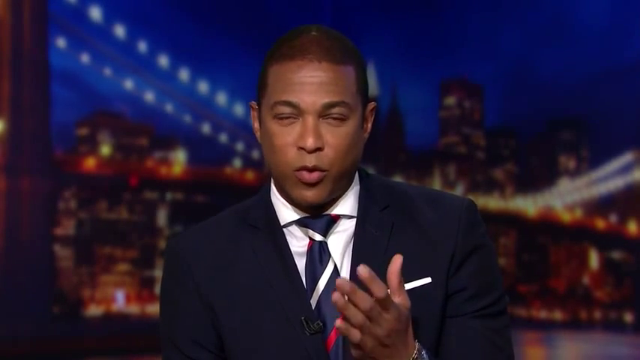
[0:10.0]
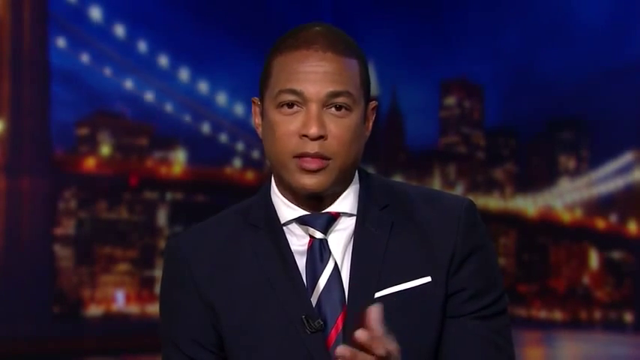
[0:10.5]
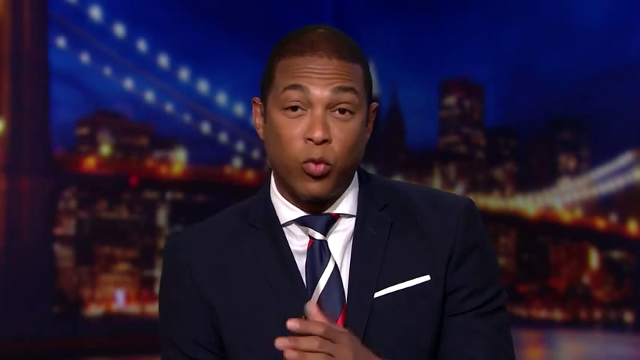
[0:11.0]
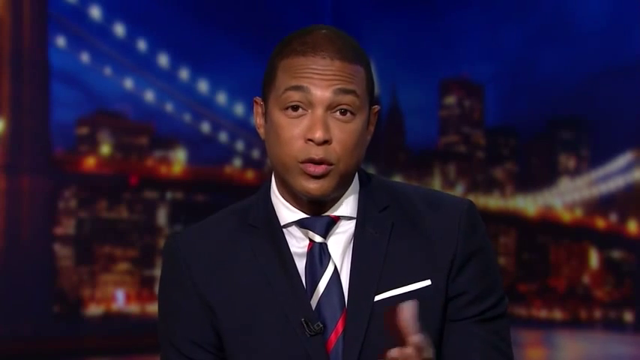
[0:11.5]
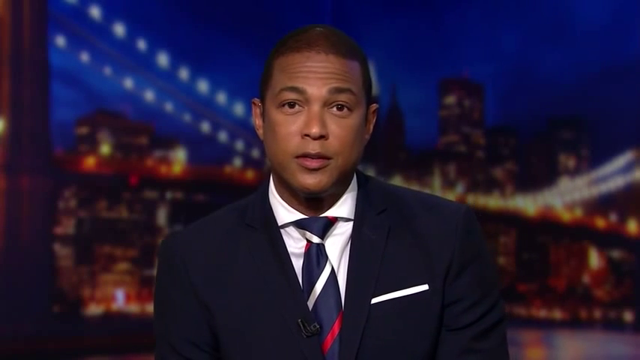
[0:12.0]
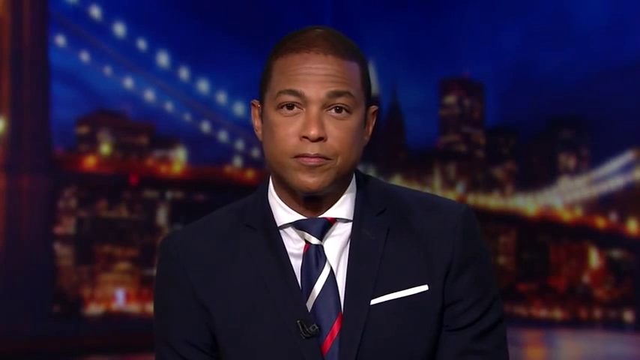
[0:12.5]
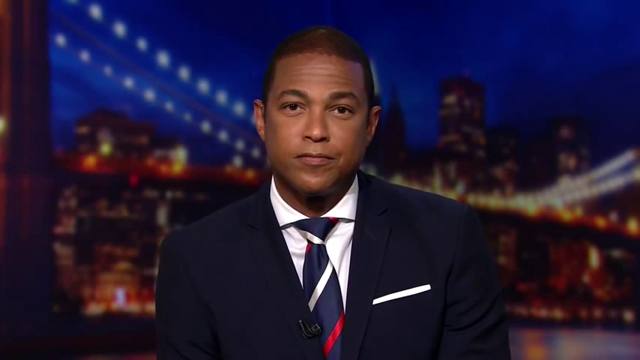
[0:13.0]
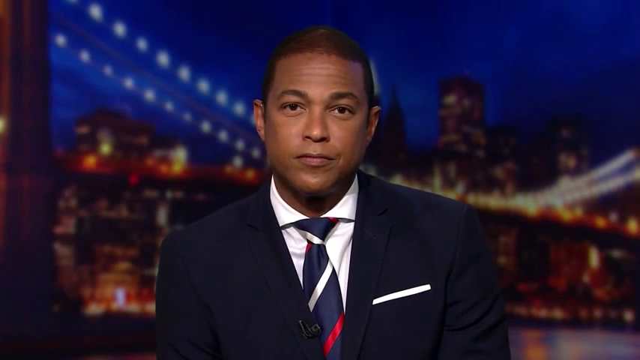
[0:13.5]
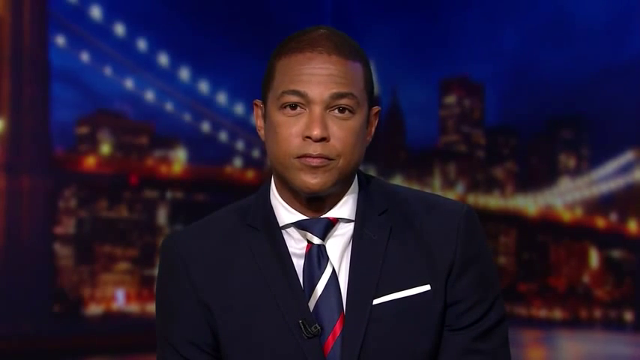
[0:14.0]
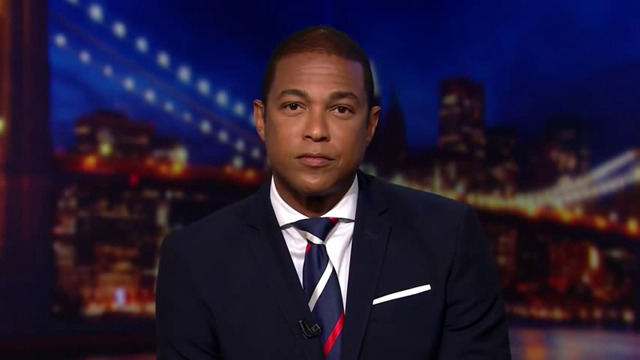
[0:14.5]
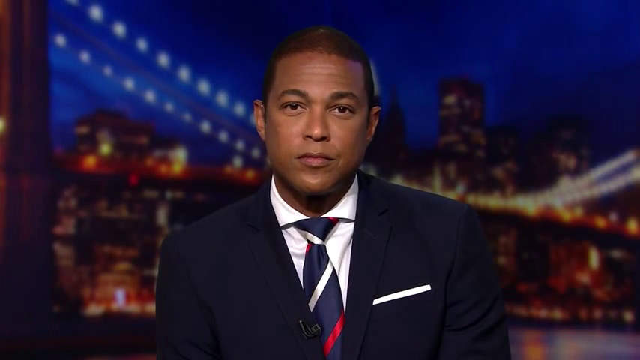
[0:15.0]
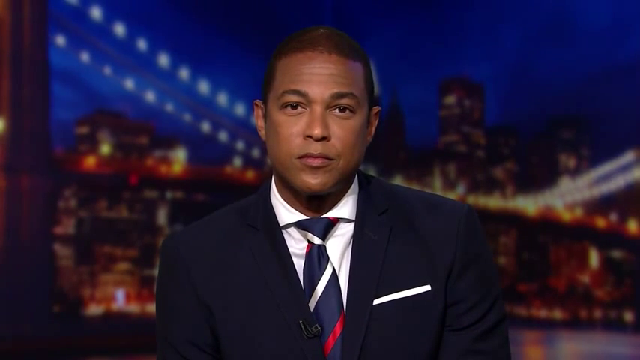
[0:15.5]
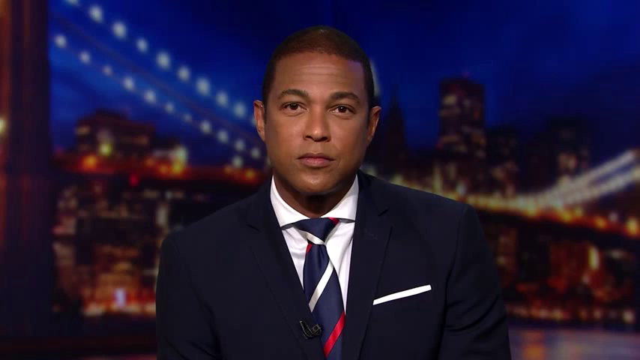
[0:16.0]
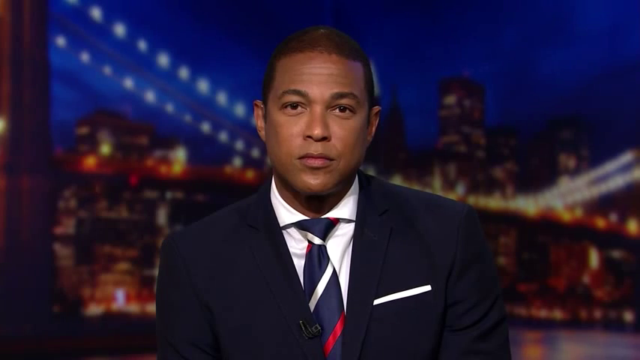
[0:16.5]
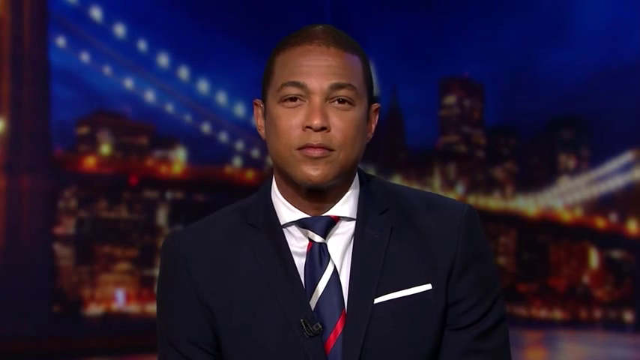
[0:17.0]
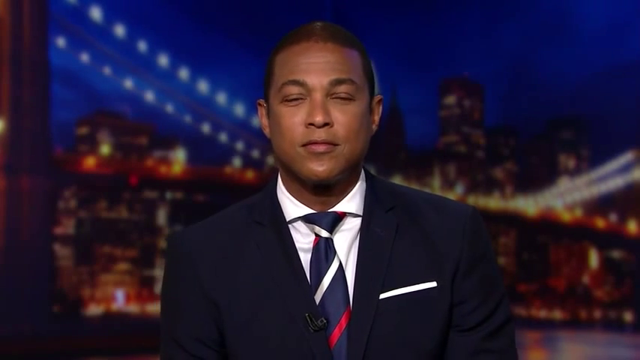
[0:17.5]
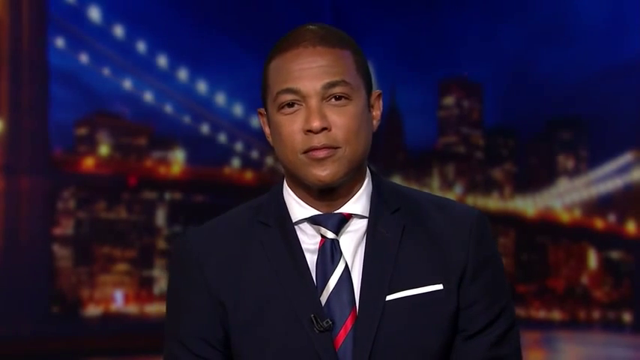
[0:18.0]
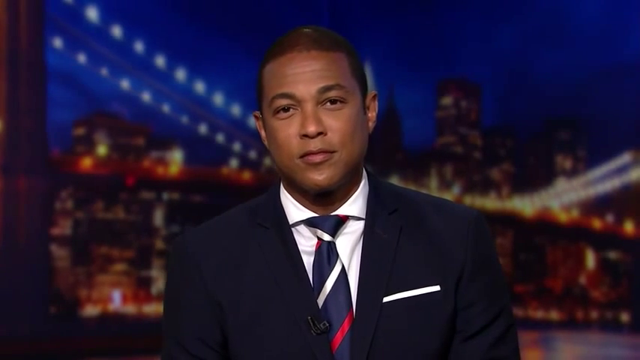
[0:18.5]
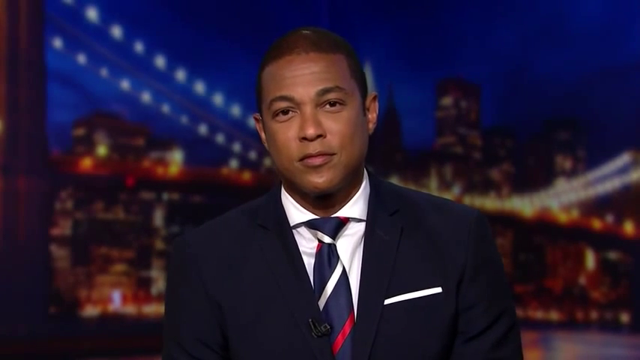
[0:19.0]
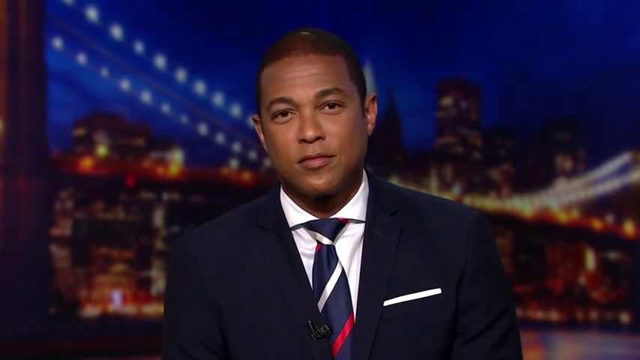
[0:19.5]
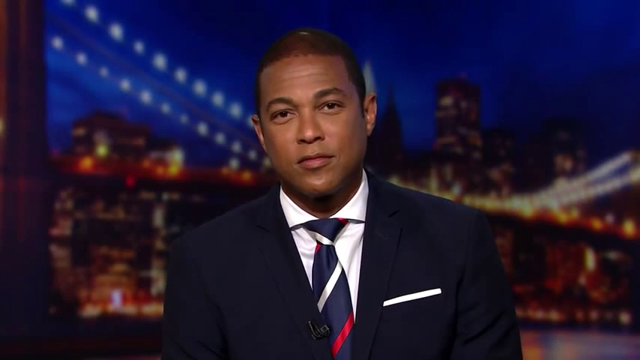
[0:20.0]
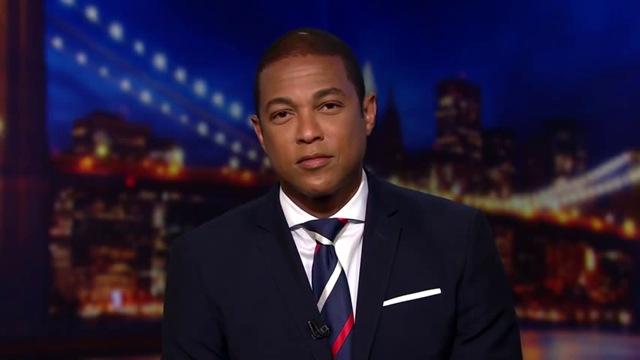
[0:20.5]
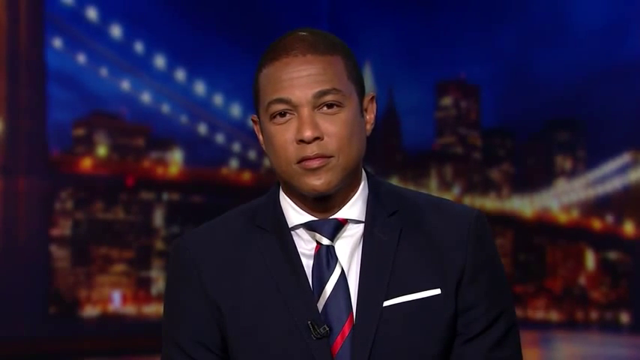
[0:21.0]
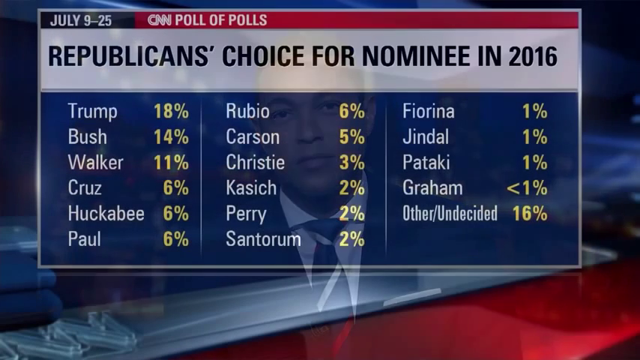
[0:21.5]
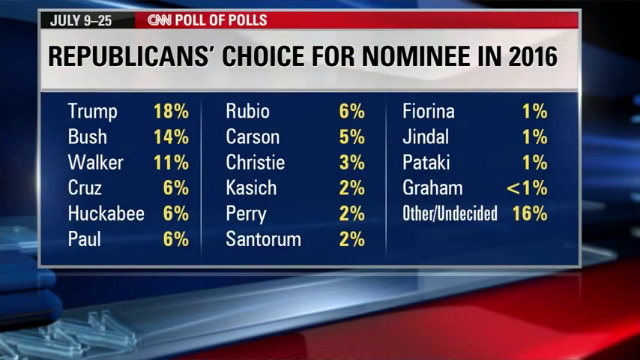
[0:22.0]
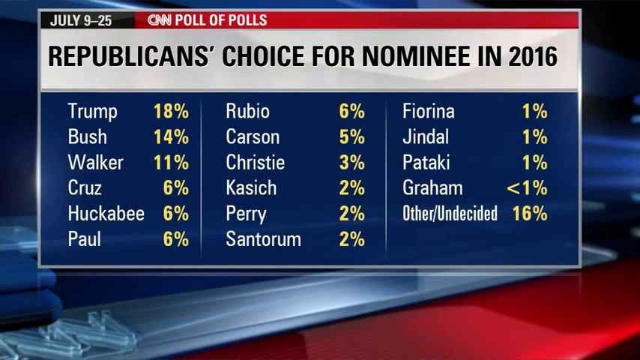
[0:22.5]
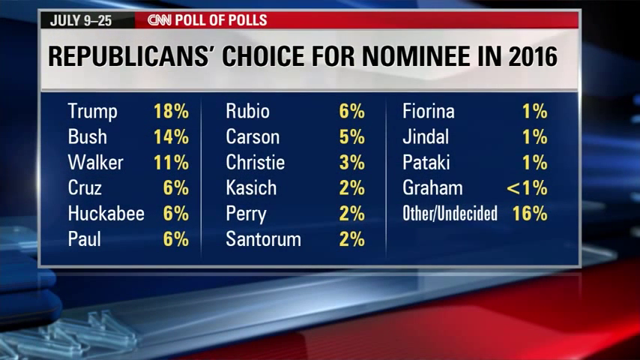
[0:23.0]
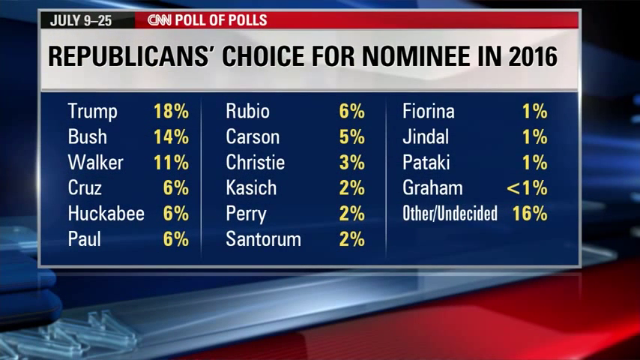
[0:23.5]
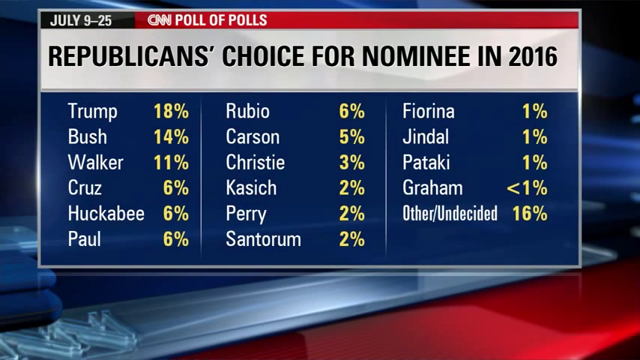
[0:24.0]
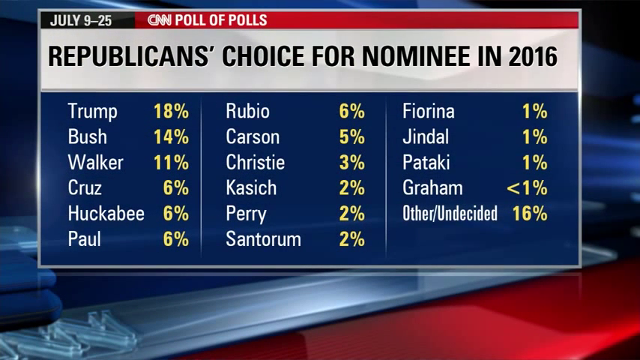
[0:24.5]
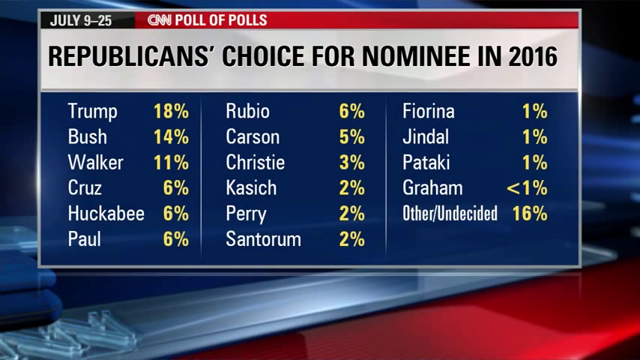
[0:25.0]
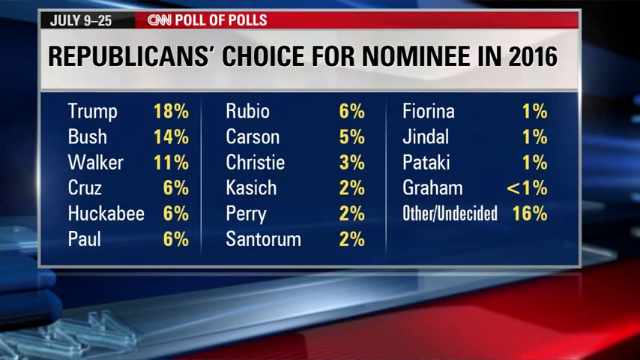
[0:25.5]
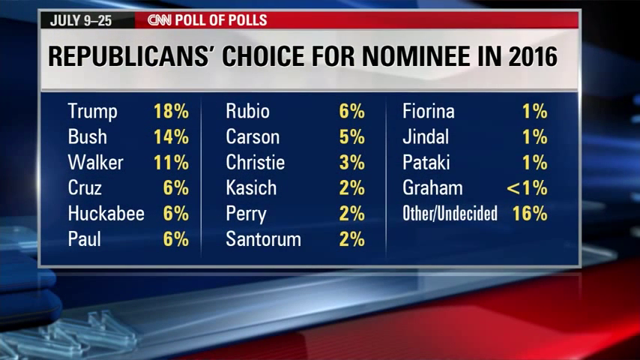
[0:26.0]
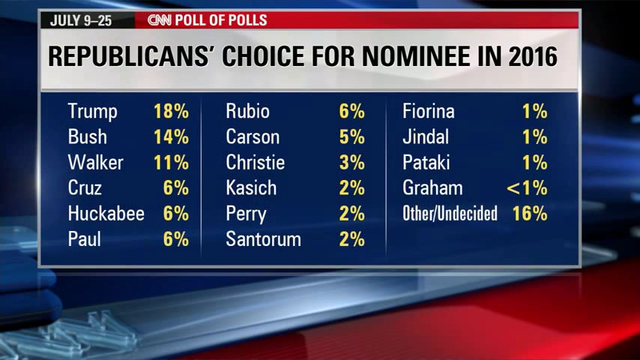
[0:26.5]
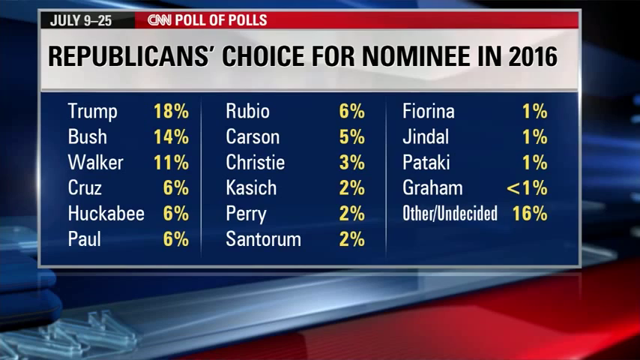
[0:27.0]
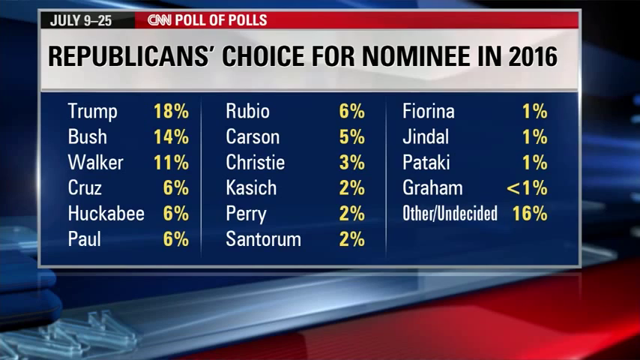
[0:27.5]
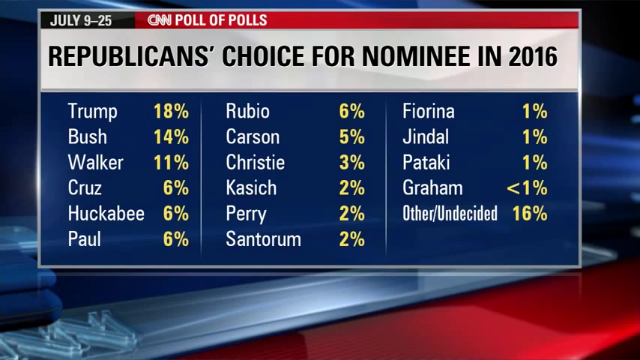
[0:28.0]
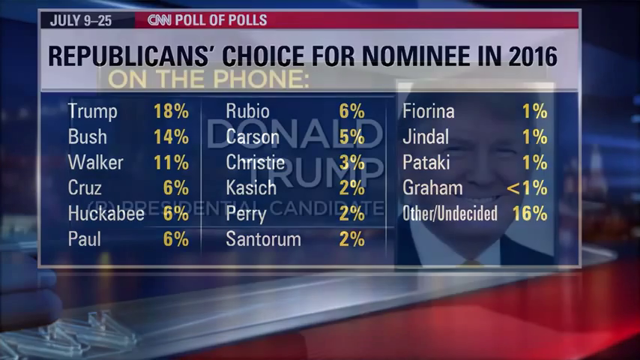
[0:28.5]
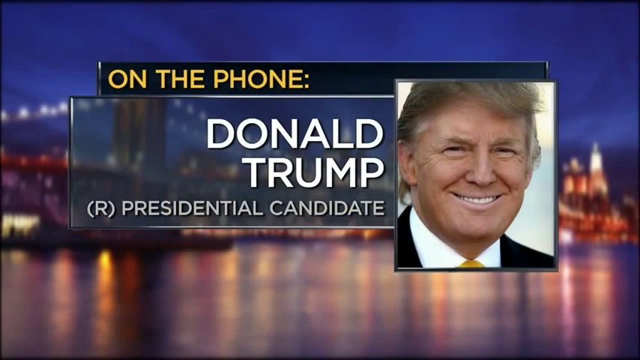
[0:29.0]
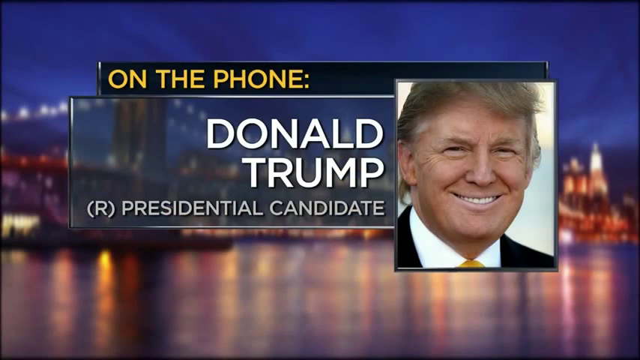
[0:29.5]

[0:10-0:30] The anchor continues speaking for a while, then pauses and seems to listen to something, holding so completely still and stiff that it looks almost as if the video is paused. The video then cuts to a table on a screen with a somewhat generic background, mostly hidden because the table takes up most of the space. At the top the table reads "July 9th to 25th, CNN Poll of Polls, Republicans' choice for nominee in 2016." Below are three columns. The first column, on the left, lists Trump 18%, Bush 14%, Walker 11%, Huckabee 6%, Paul 6%, Rubio 6%, Carson 5%, Christie 3%, Kasich 2%, Perry 2%, and Santorum 2%. The third column lists Fiorina 1%, Jindal 1%, Pataki 1%, Graham less than 1%, and Other/Undecided 16%. The names are in white text and the numbers in yellow. The table background is dark blue, the title is white, and there is red and black at the very top.